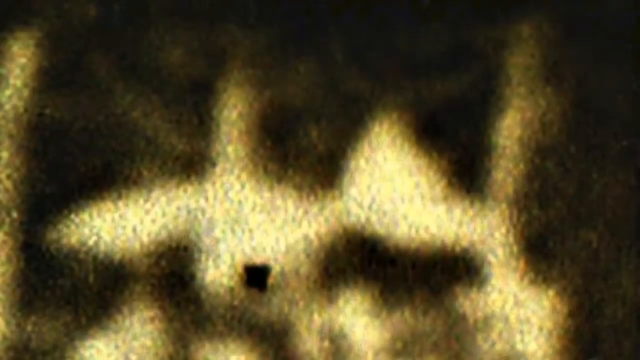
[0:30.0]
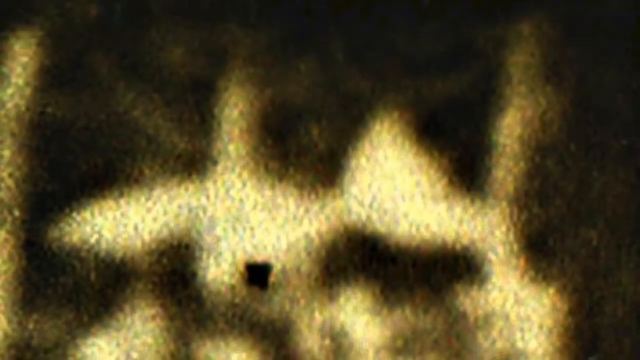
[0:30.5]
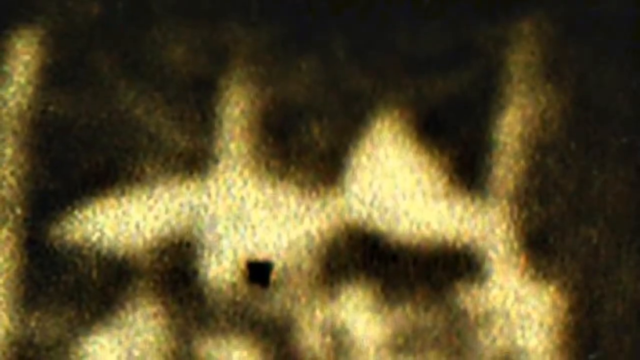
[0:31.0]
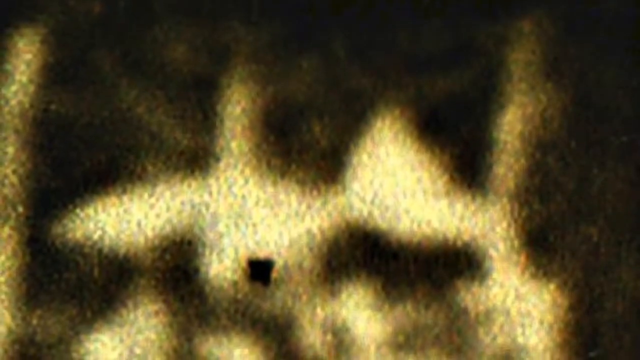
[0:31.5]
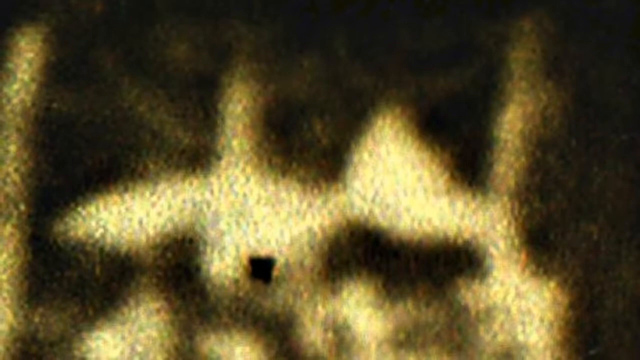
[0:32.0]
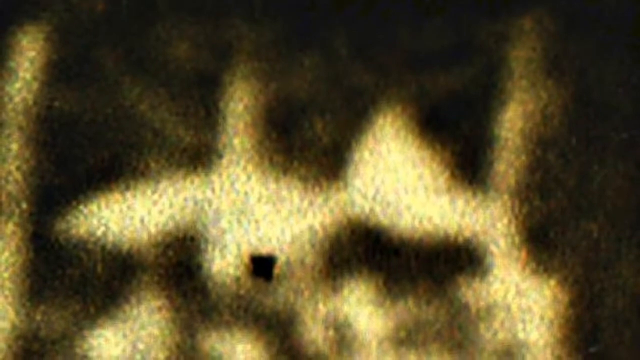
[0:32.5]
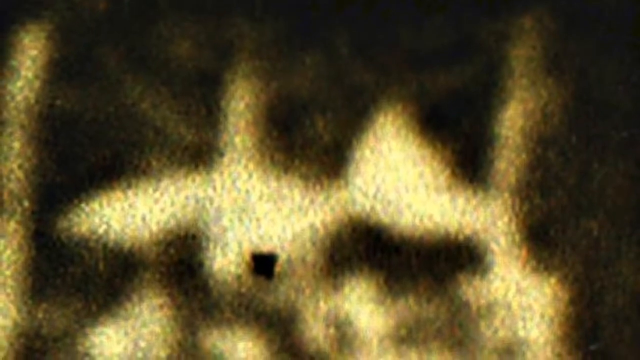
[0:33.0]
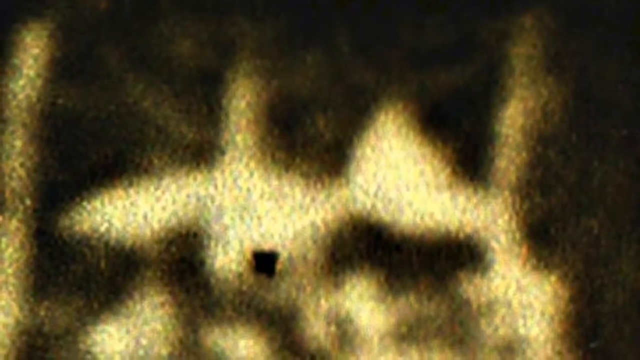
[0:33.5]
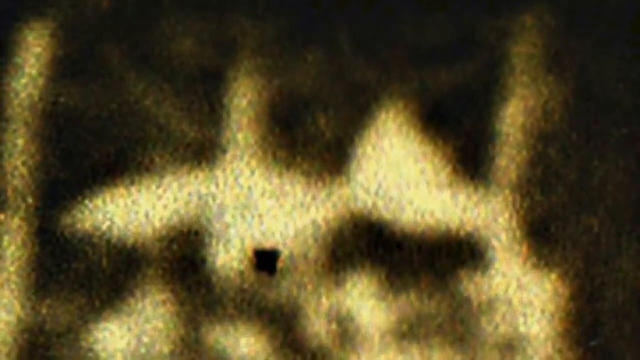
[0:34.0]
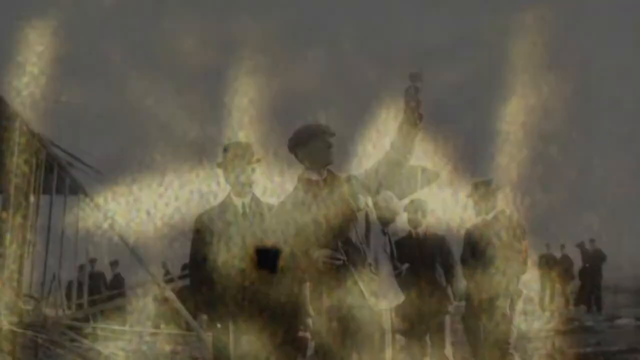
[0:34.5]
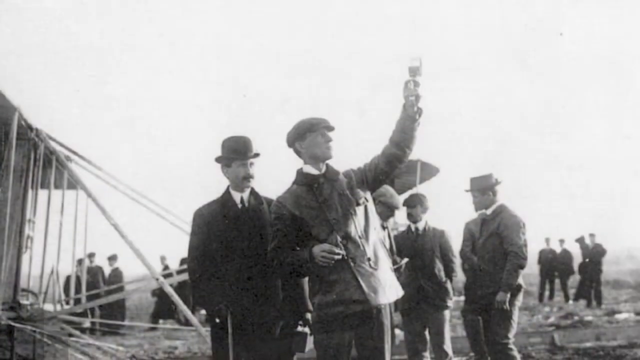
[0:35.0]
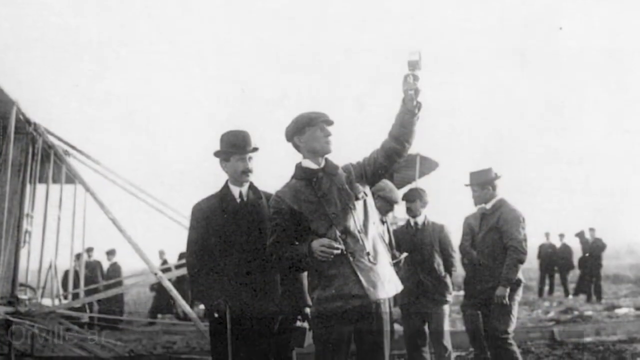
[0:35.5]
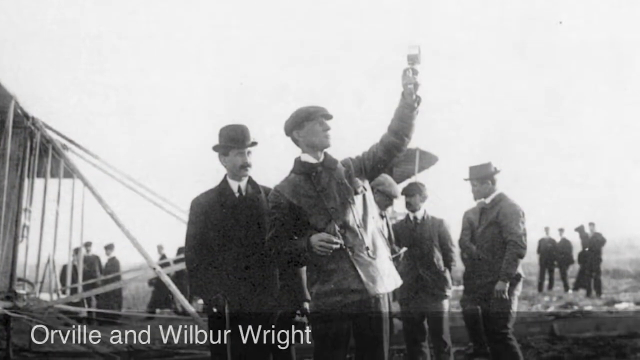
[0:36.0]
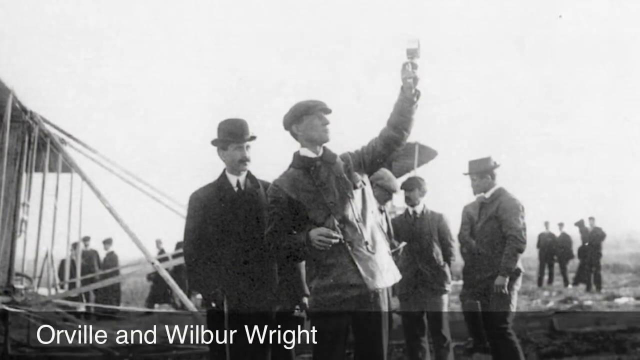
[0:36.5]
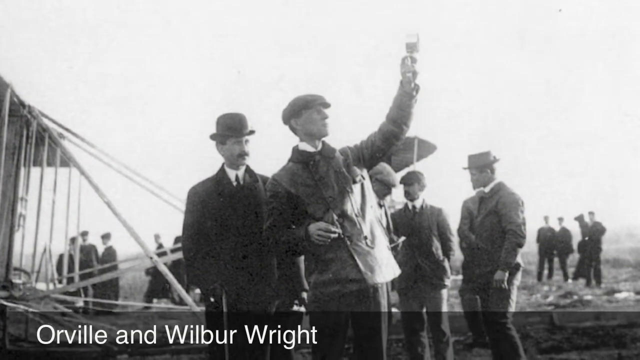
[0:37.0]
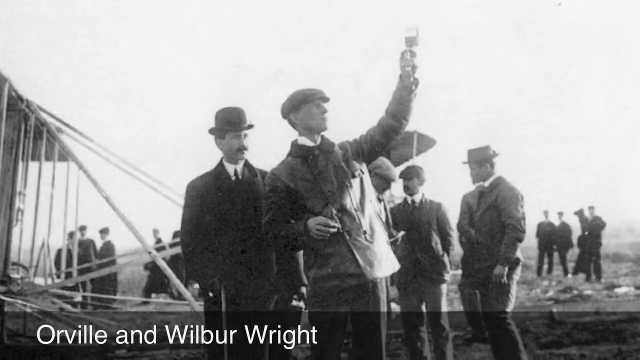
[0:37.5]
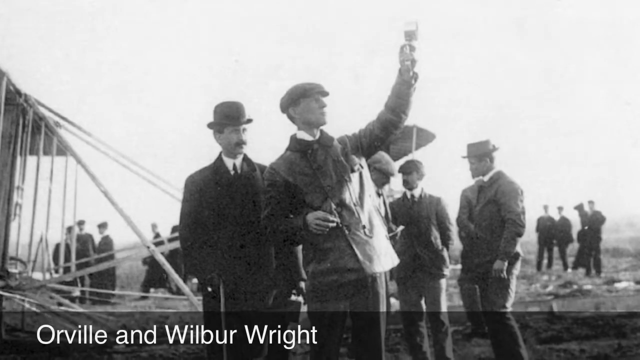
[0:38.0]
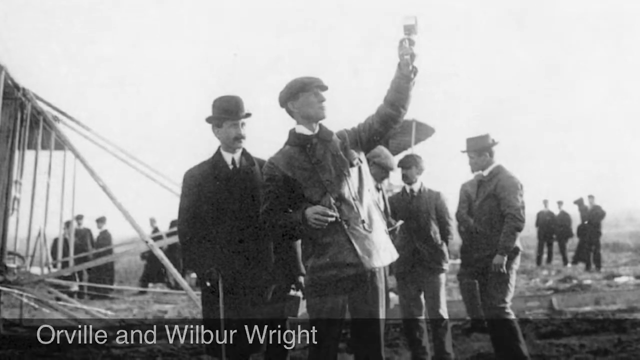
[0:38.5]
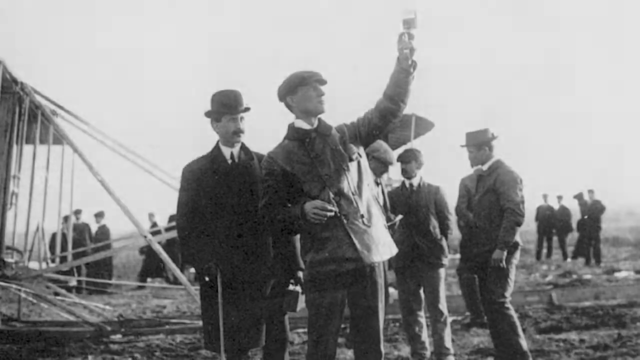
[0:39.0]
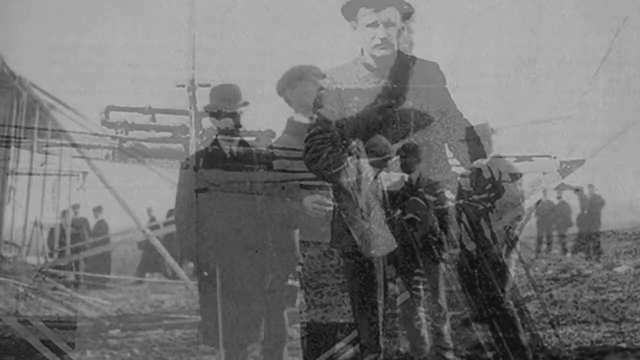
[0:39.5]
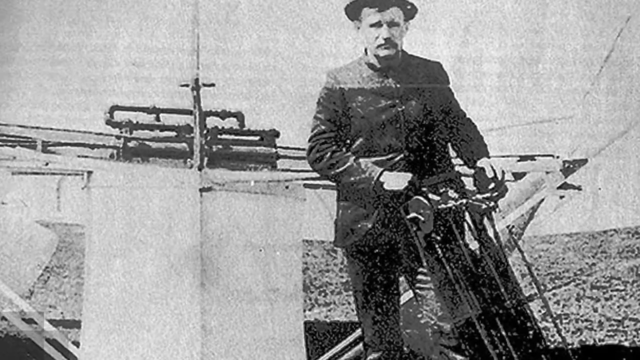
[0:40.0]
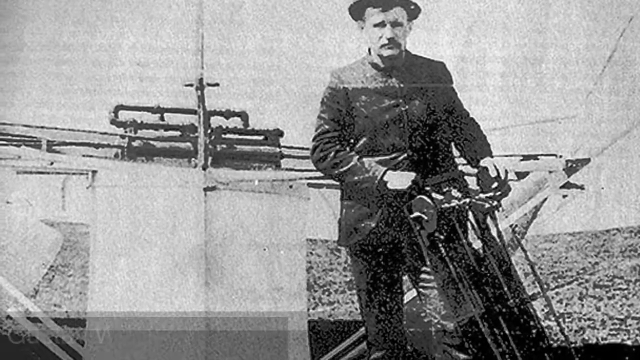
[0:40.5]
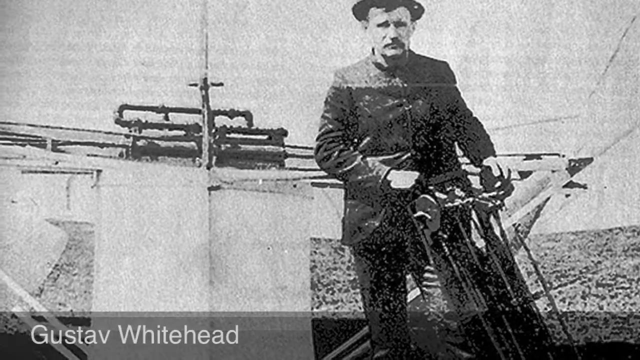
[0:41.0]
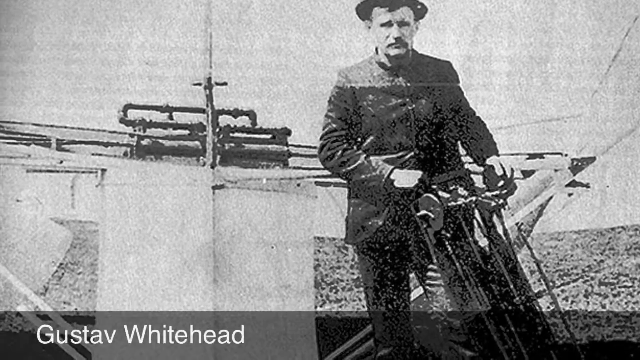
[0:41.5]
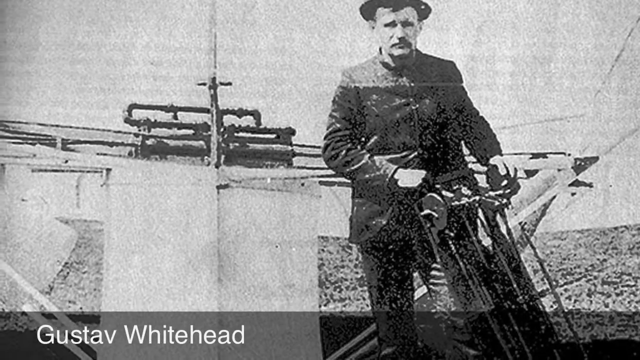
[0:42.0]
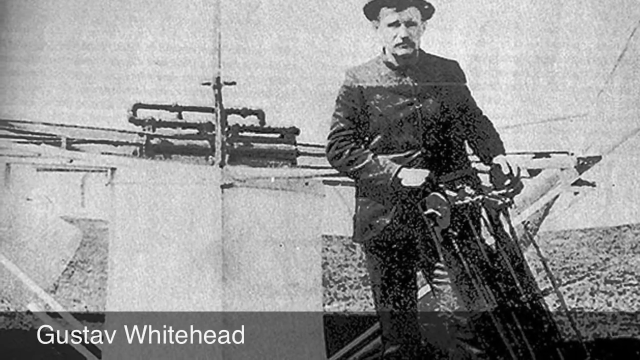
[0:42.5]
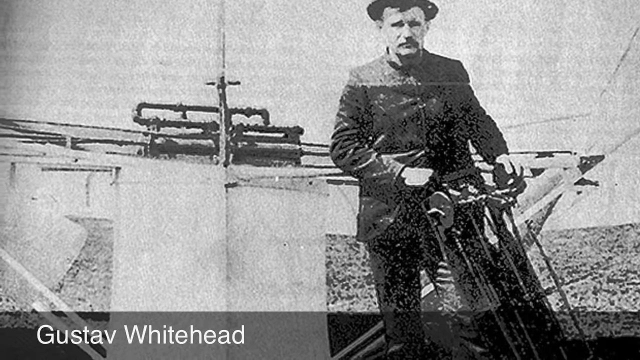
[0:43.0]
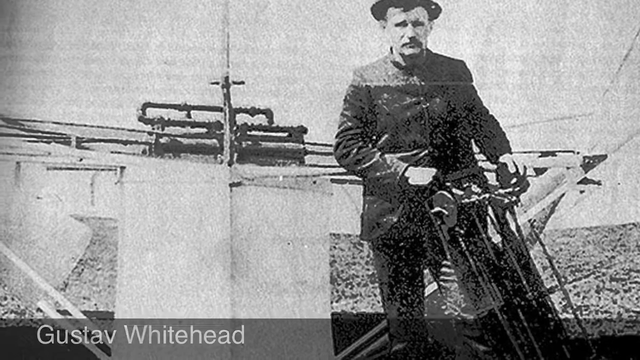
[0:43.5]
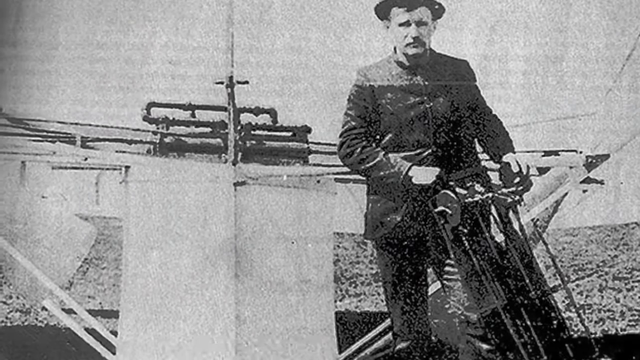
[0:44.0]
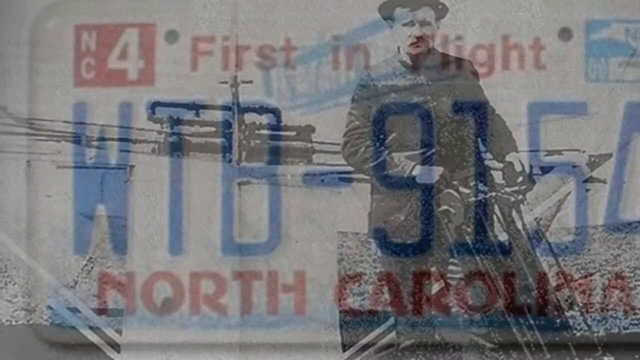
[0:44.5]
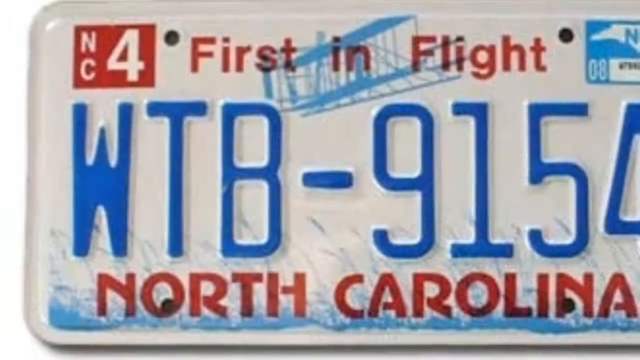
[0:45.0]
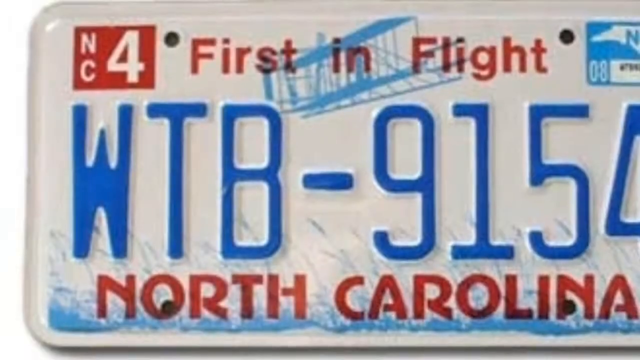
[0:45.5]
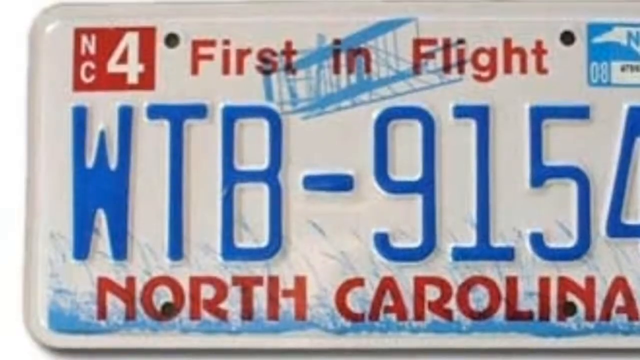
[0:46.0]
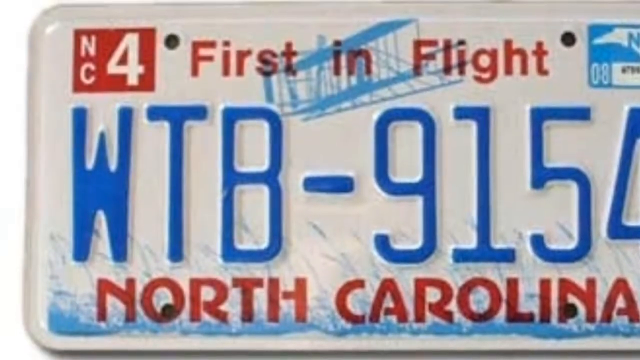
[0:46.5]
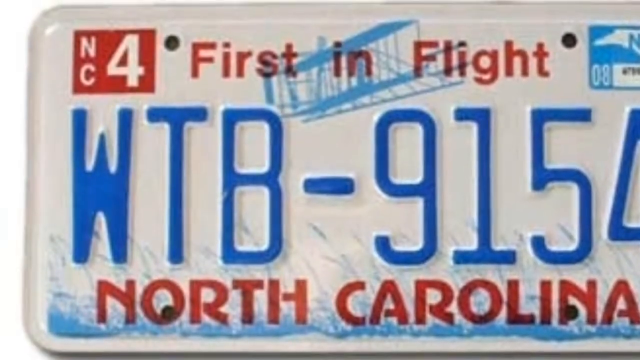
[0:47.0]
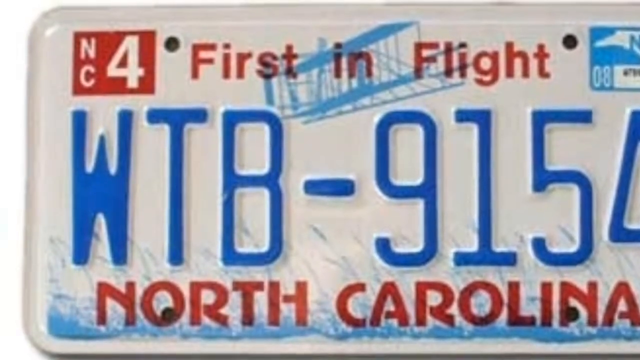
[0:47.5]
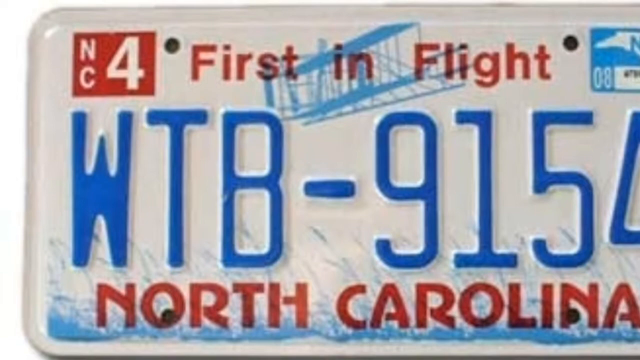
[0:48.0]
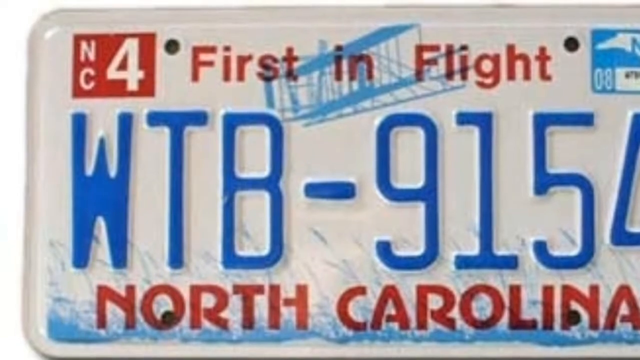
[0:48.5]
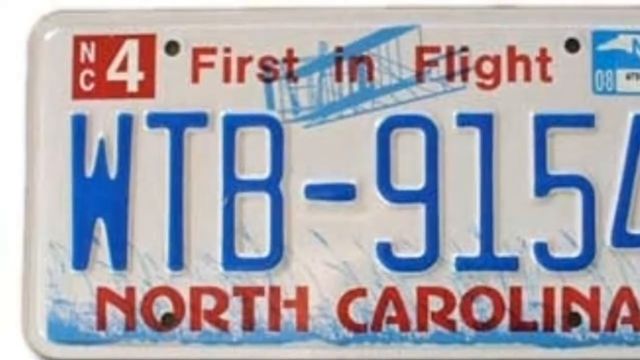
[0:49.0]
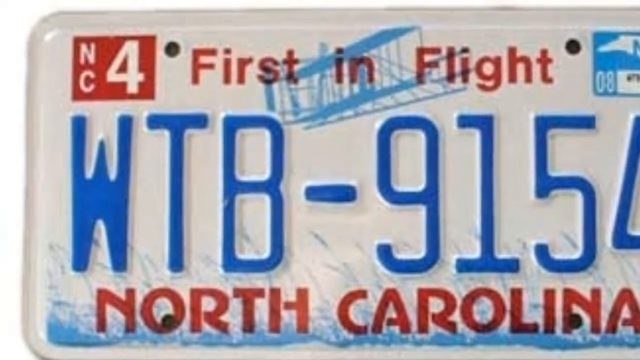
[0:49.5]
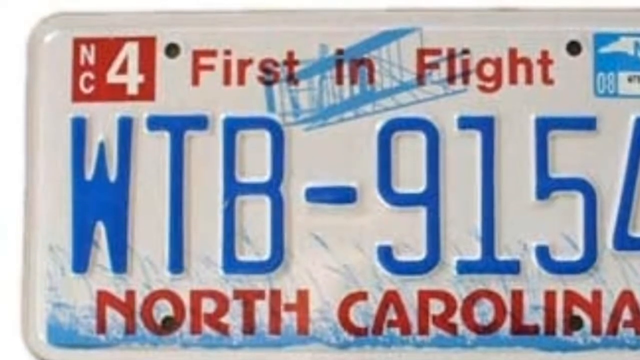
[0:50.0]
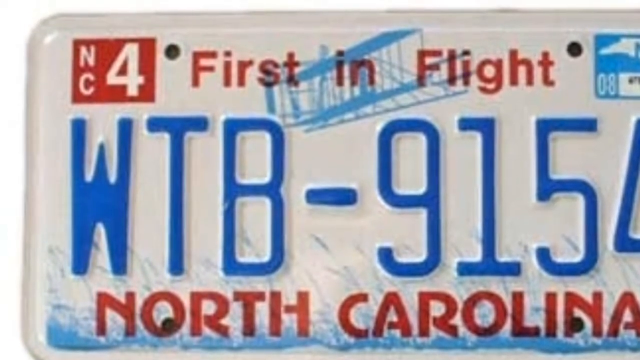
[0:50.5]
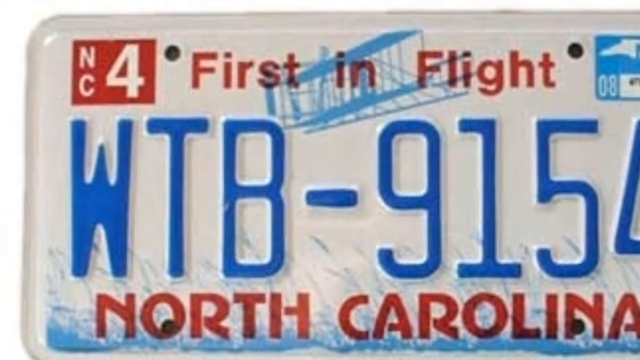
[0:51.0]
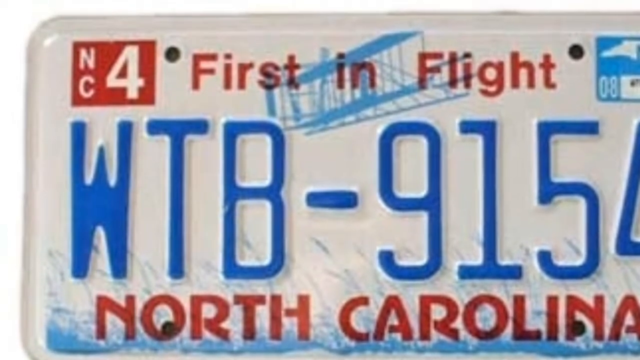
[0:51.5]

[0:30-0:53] Wilbur Wright and others are christening the first piece of equipment they built and created with Gustav. "First in flight, North Carolina" is shown, on something almost like a license plate.